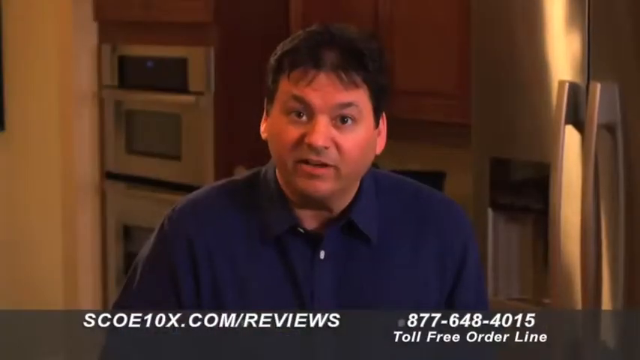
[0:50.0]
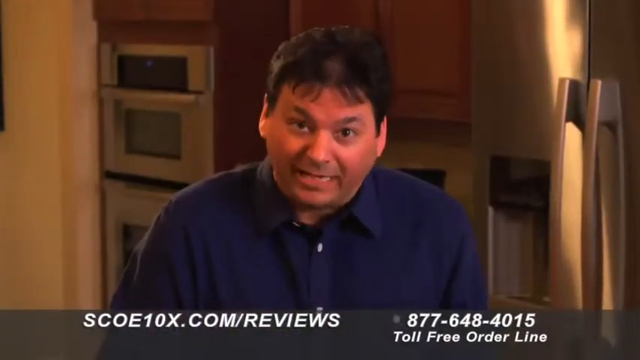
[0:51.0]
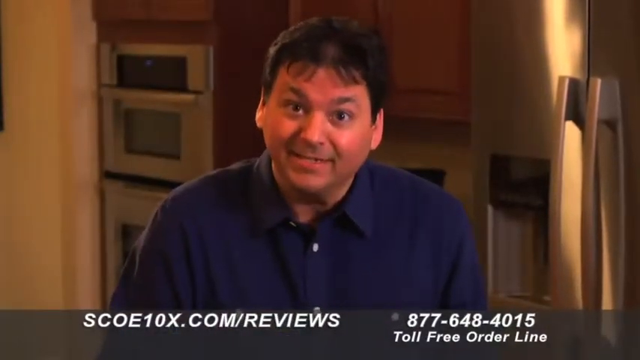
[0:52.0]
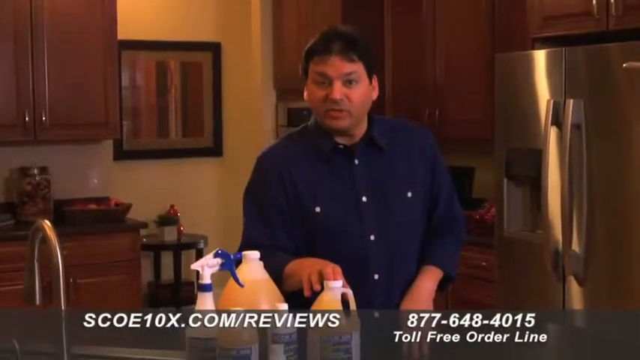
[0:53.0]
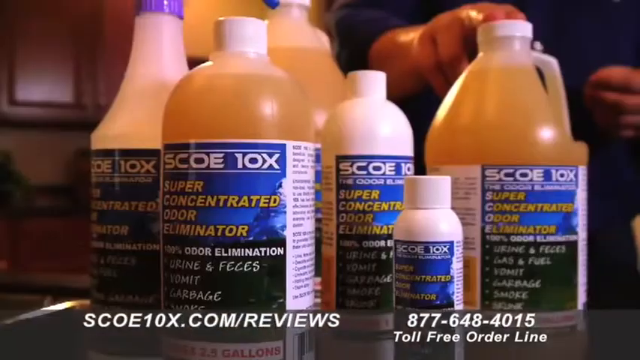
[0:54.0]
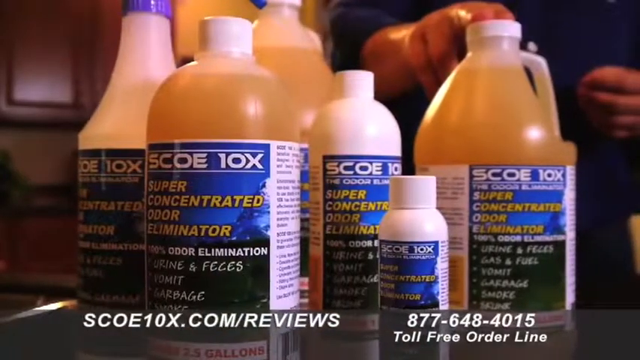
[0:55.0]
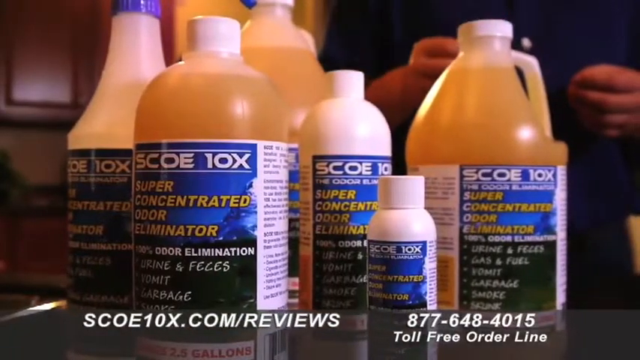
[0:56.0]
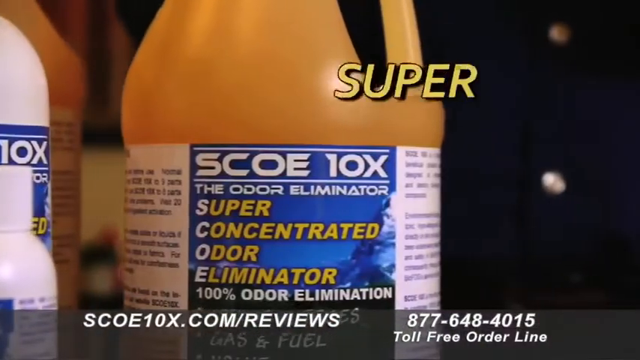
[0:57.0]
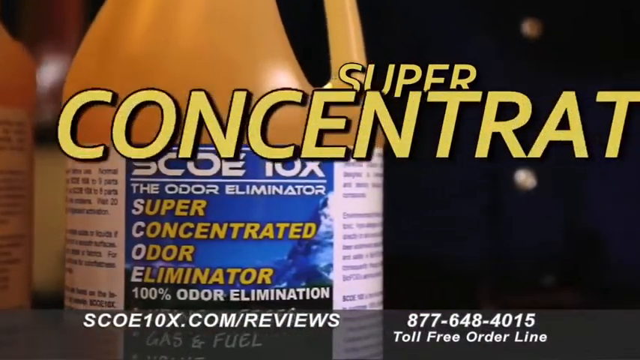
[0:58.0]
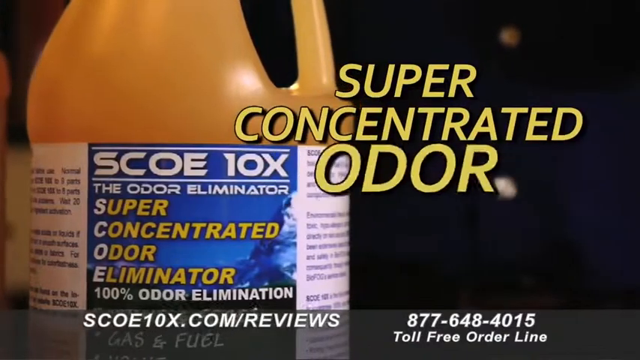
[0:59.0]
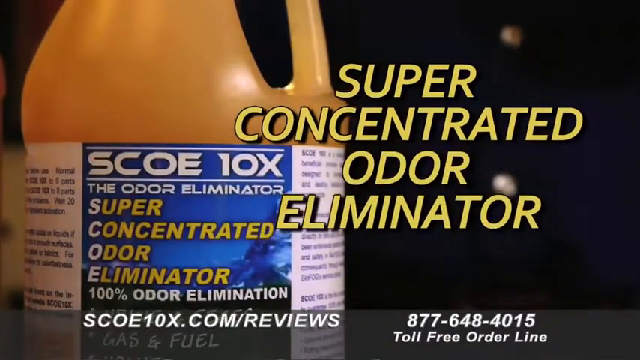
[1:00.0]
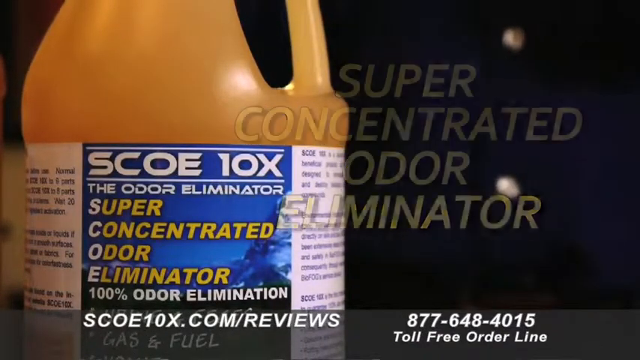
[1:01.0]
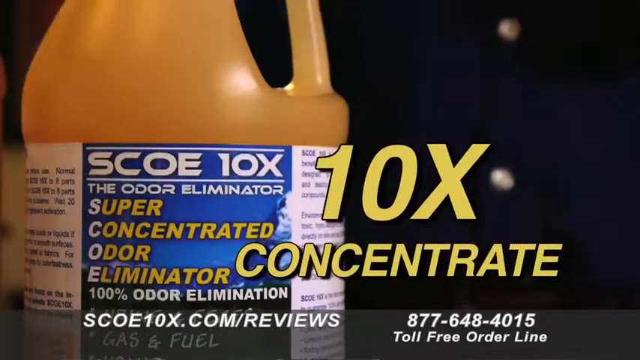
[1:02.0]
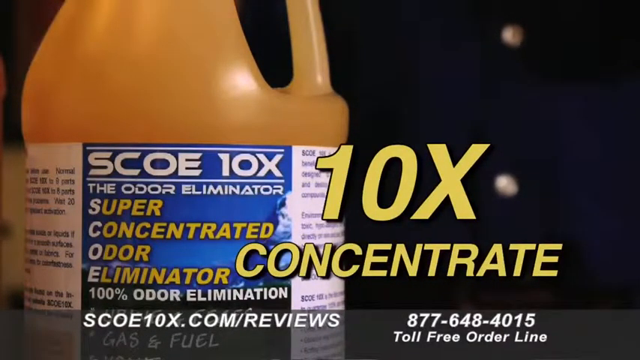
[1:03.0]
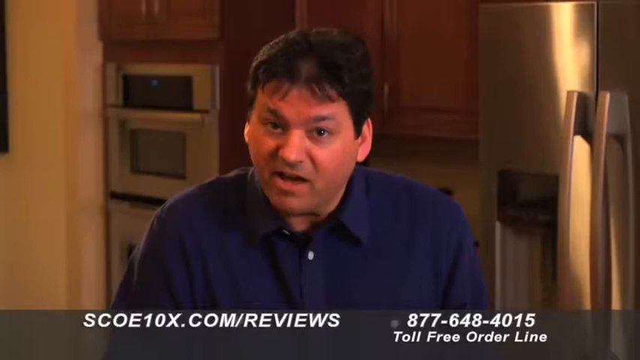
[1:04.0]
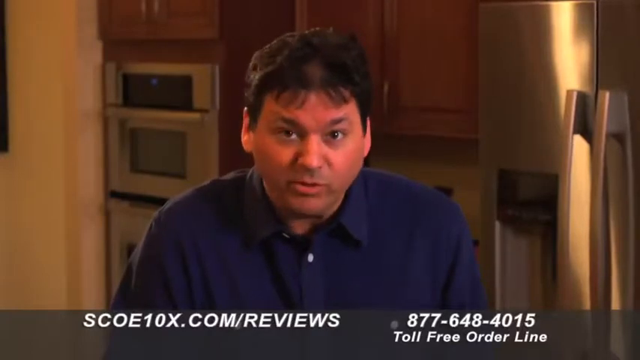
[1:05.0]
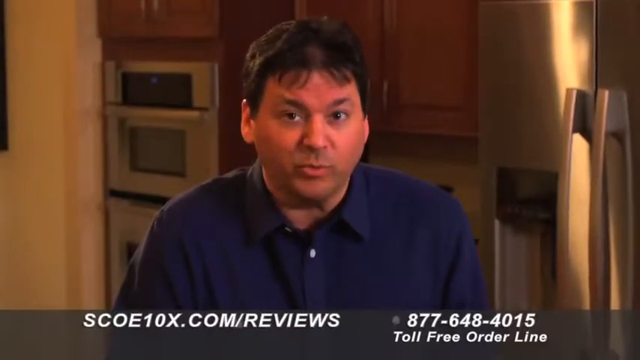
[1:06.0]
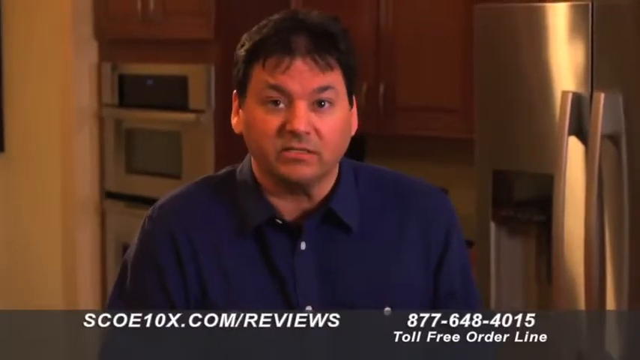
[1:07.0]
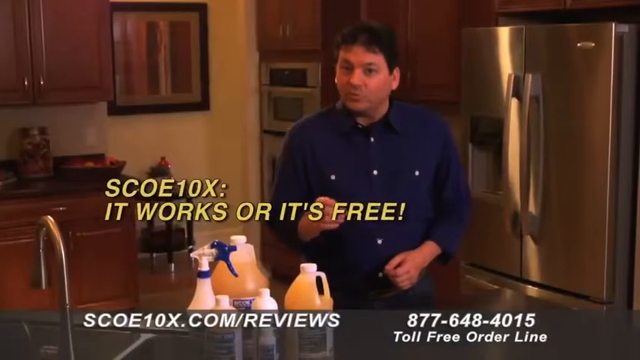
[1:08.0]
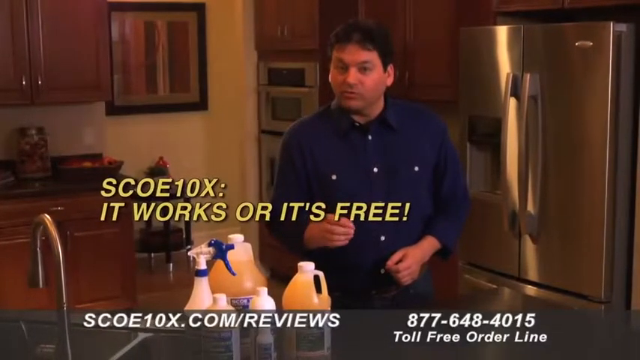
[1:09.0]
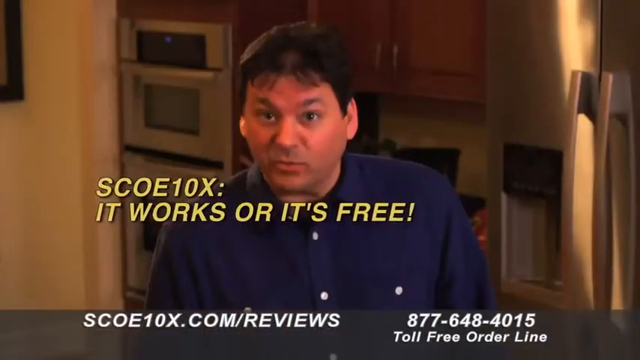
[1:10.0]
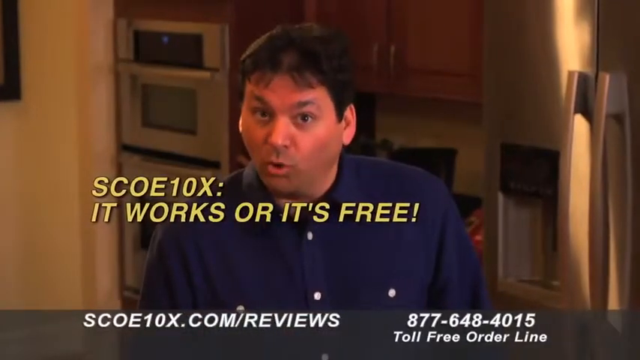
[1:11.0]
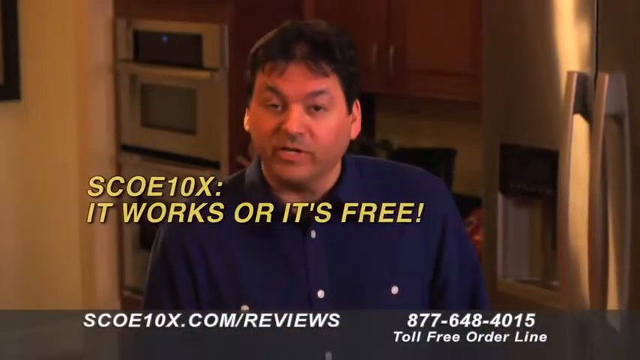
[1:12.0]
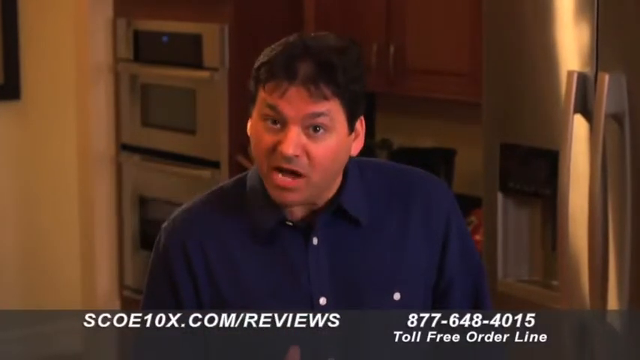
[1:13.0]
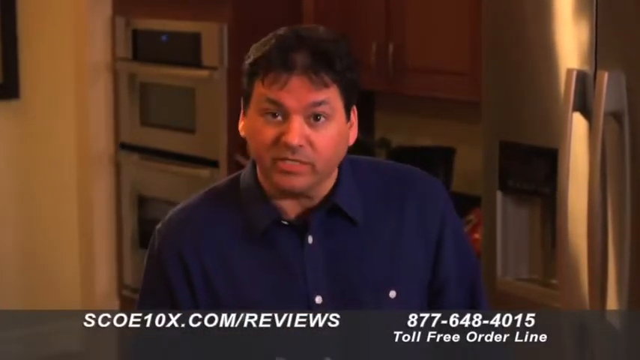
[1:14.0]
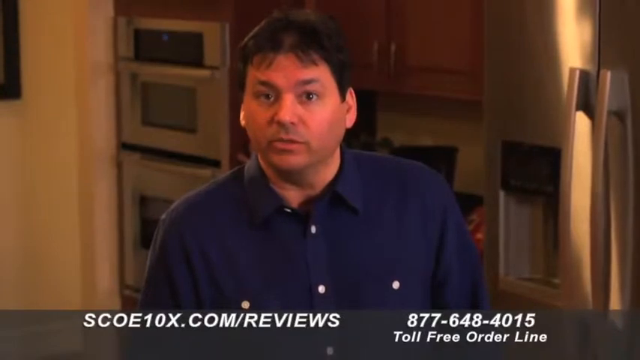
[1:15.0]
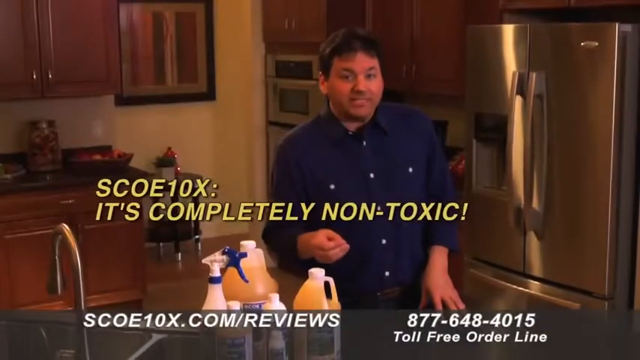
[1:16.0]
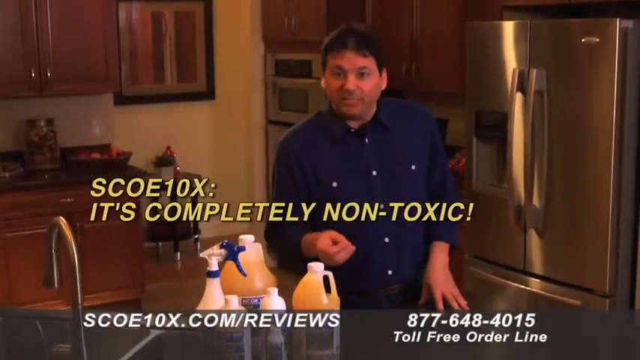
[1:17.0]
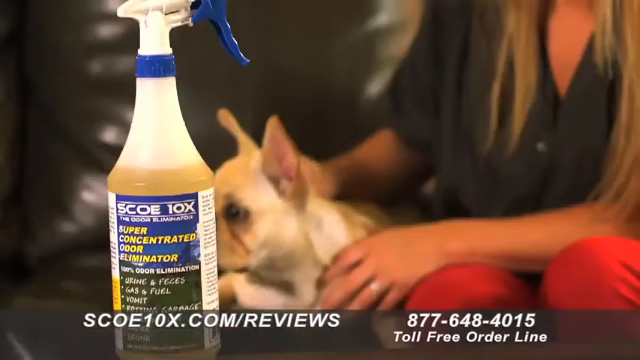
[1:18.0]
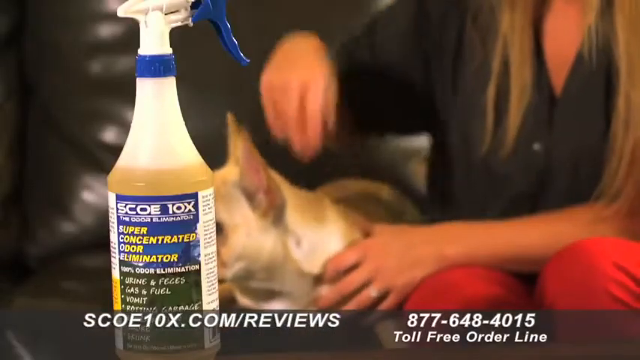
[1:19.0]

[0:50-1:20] The man talks to the camera, this time shown from the chest up. He seems to stare intently at the camera while speaking, his eyes wide open, seemingly placing real emphasis on what he says. After a few seconds, a zoomed-out shot shows him back in the same kitchen, where he puts his right hand, on the viewer's left, on a bottle sitting on the counter, maybe placing two fingers on top of its bottle cap. The video then cuts to a close-up of the Sko 10x products: bottles of various sizes, some large and some small. Some are see-through with a yellow product visible inside, and some are just white and not see-through. The camera pans right and zooms in on a see-through bottle with yellow liquid, showing its blue and white Sko 10x label, which reads "Sko 10x the odor eliminator super concentrated odor eliminator." The camera pans right again and the word "super" pops up at the top of the screen.